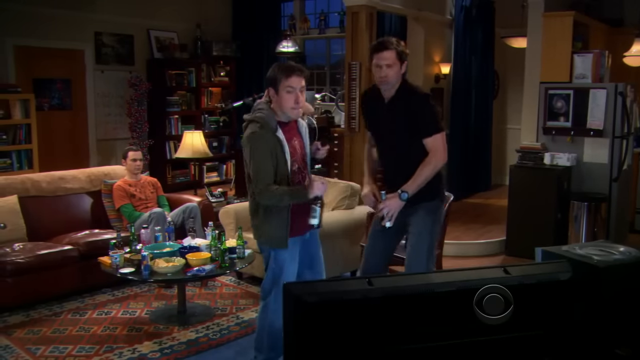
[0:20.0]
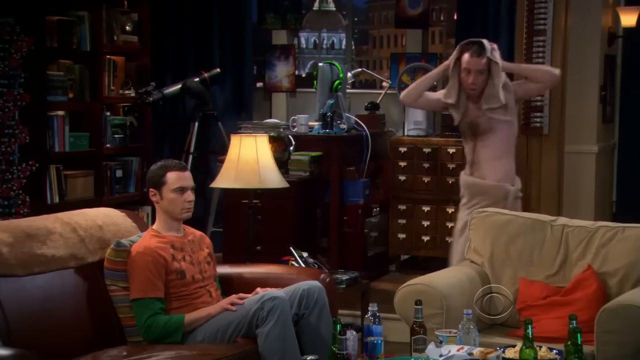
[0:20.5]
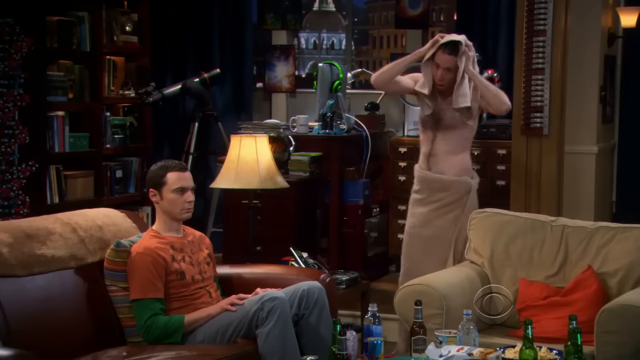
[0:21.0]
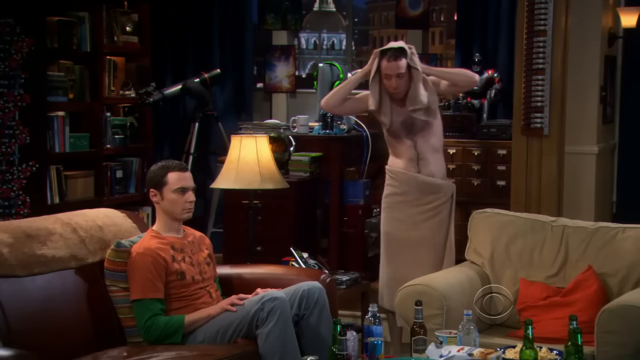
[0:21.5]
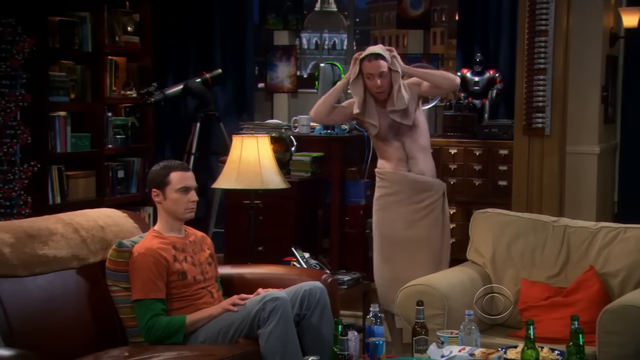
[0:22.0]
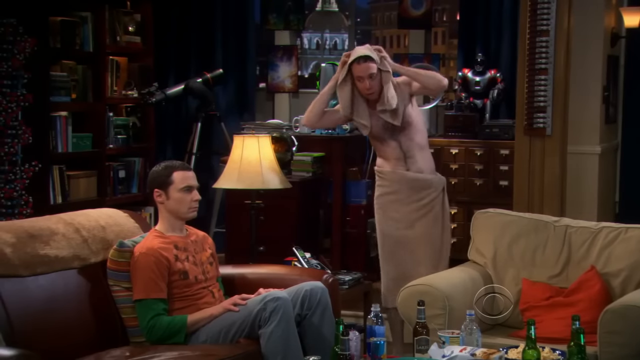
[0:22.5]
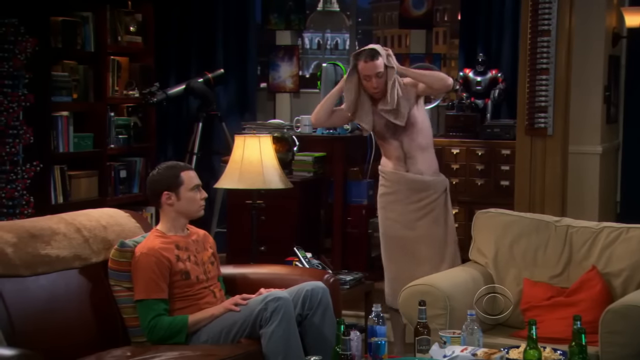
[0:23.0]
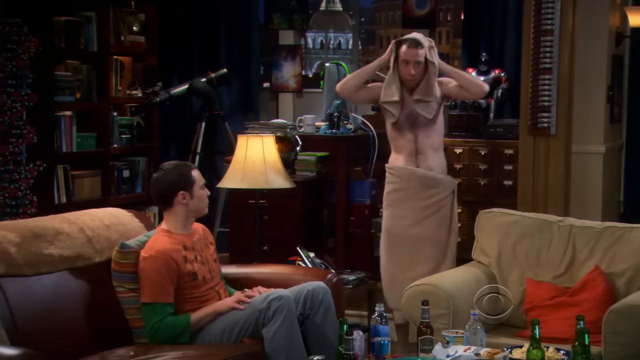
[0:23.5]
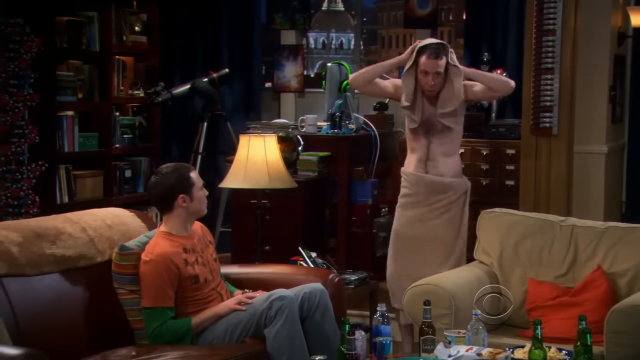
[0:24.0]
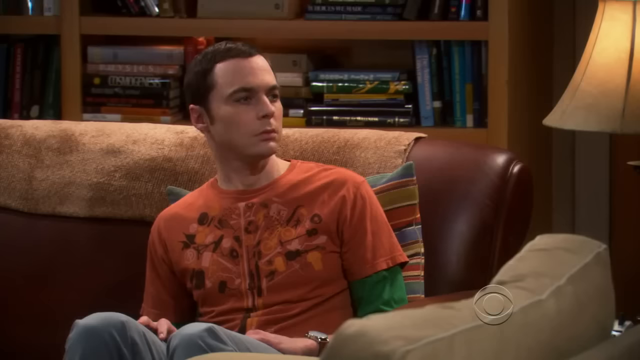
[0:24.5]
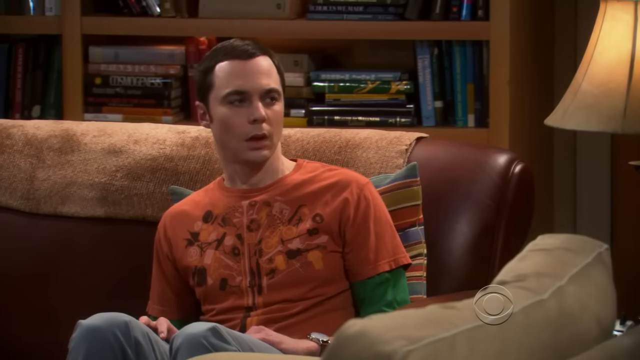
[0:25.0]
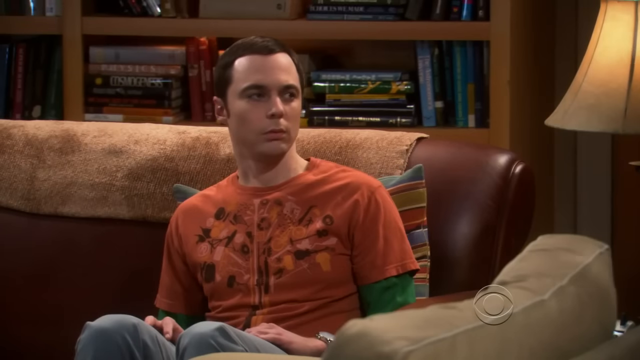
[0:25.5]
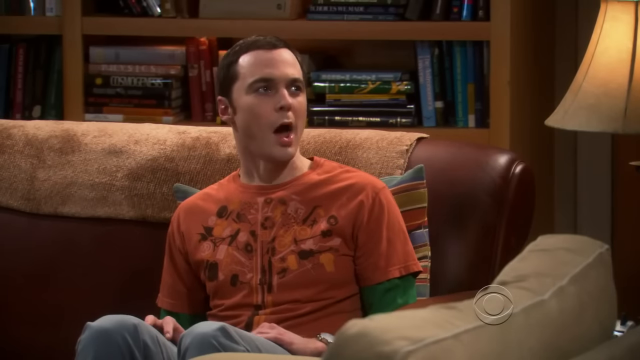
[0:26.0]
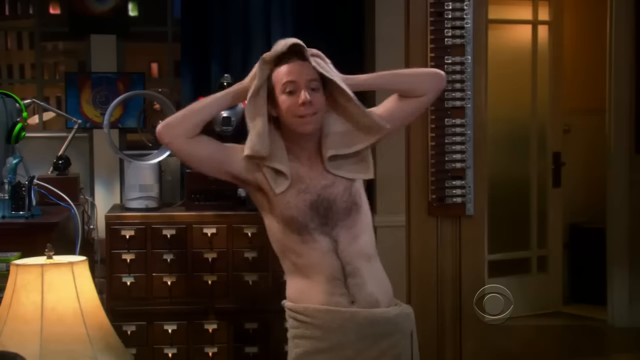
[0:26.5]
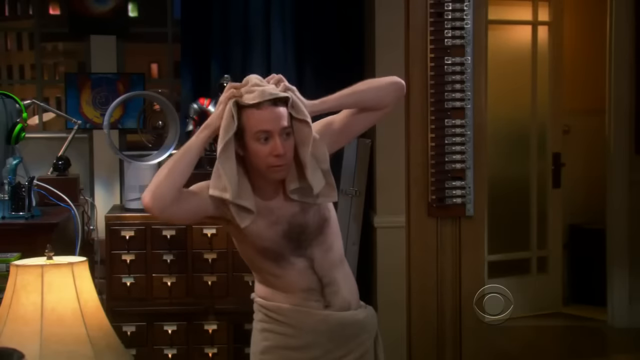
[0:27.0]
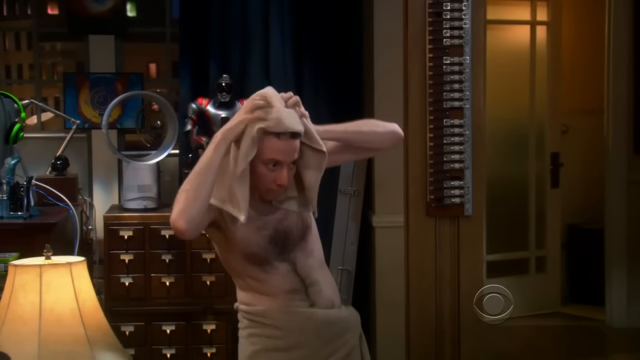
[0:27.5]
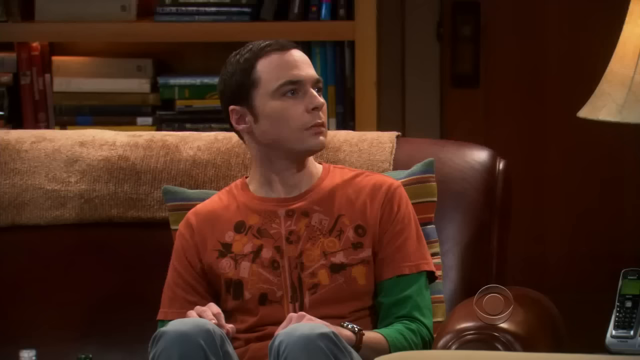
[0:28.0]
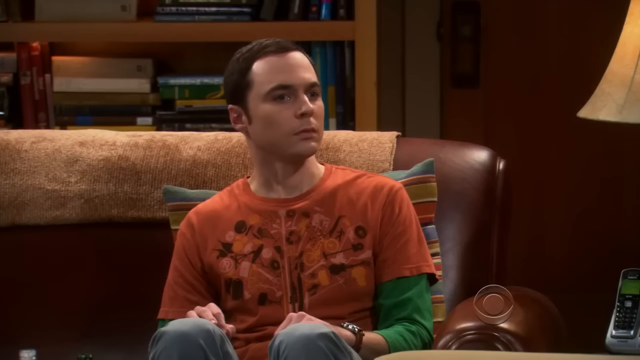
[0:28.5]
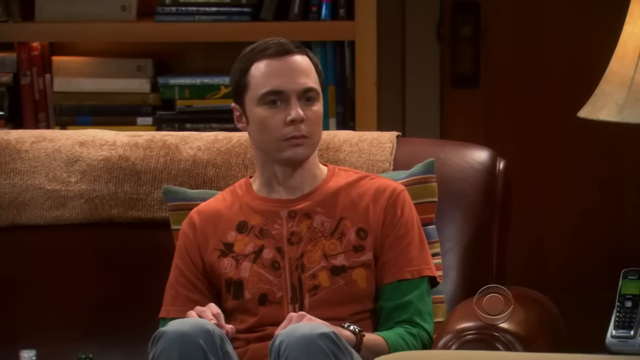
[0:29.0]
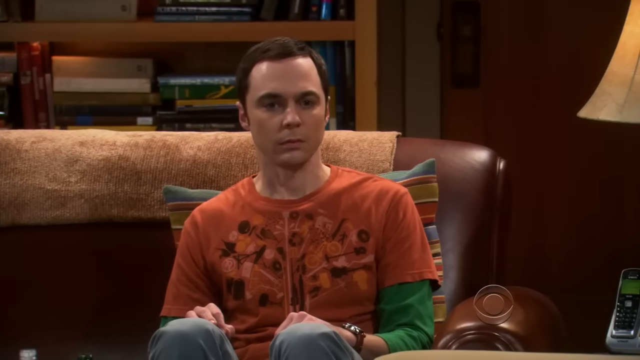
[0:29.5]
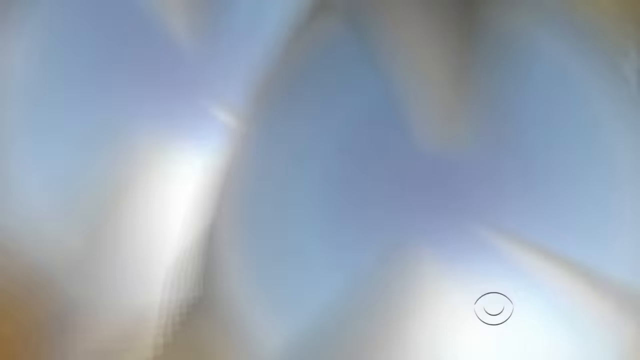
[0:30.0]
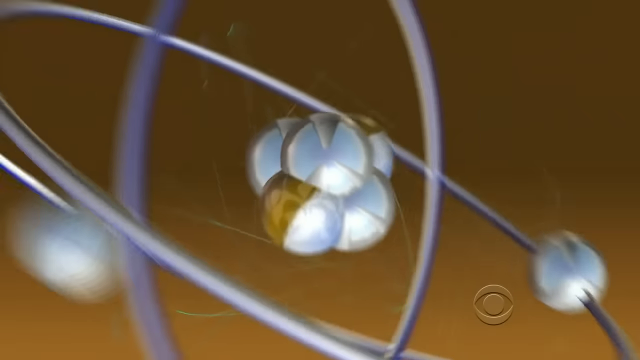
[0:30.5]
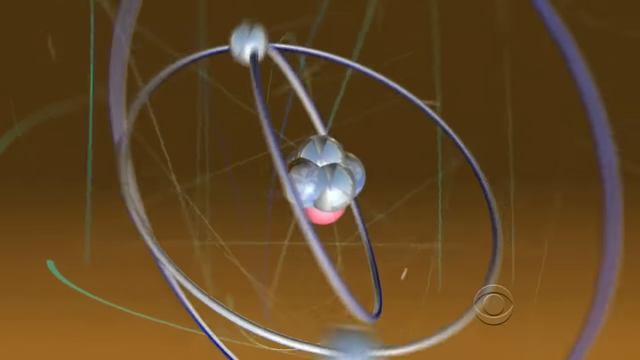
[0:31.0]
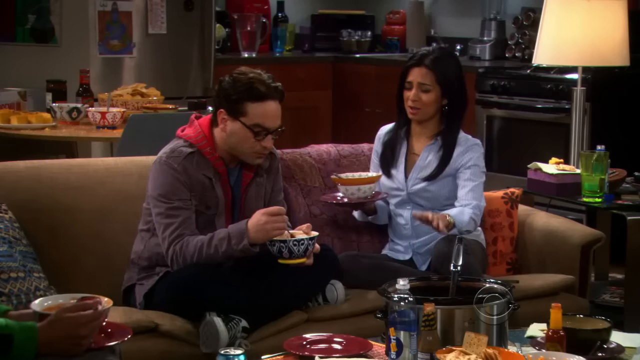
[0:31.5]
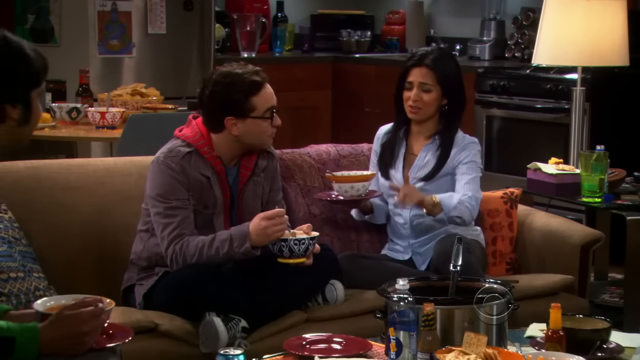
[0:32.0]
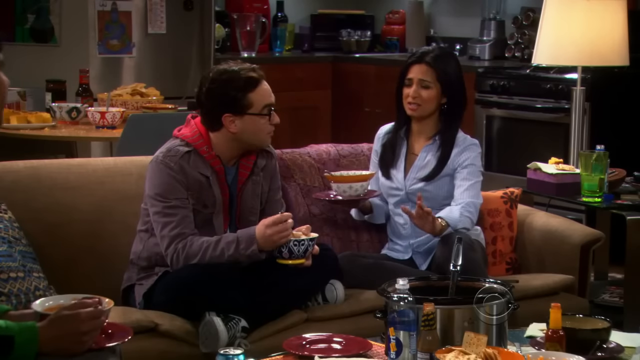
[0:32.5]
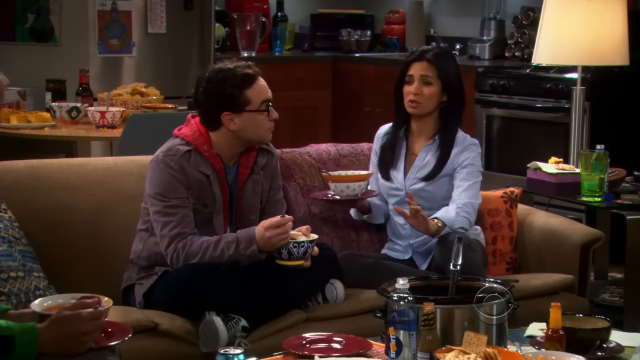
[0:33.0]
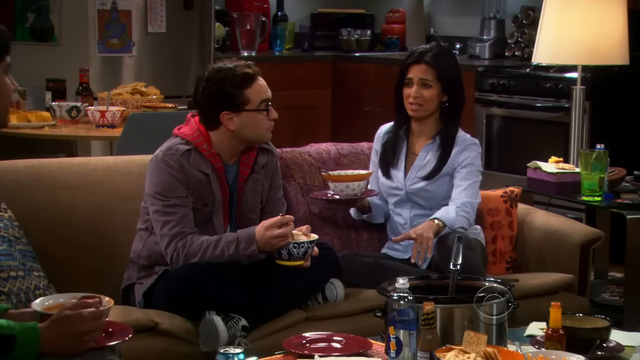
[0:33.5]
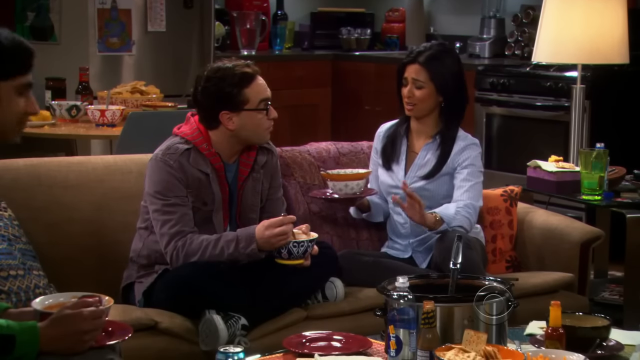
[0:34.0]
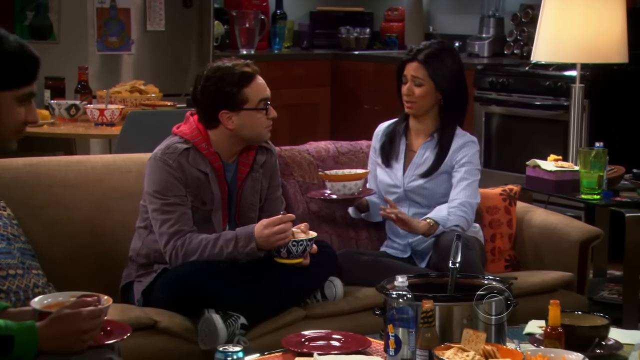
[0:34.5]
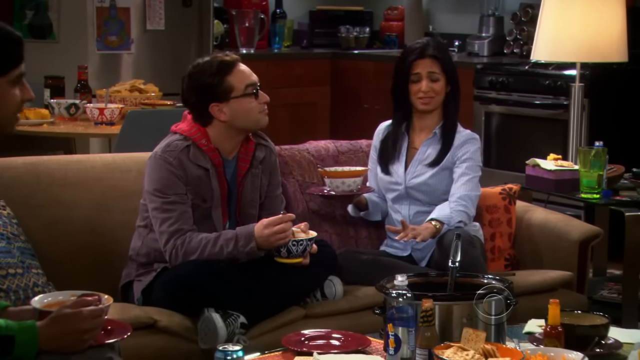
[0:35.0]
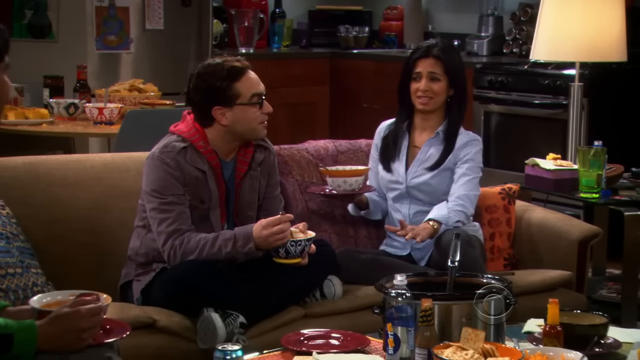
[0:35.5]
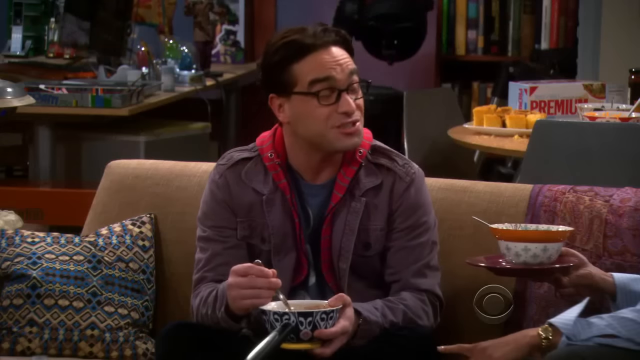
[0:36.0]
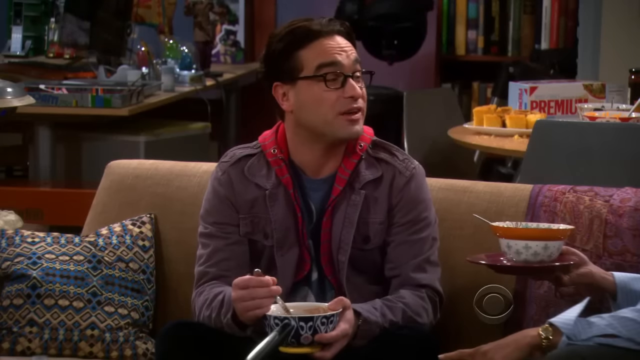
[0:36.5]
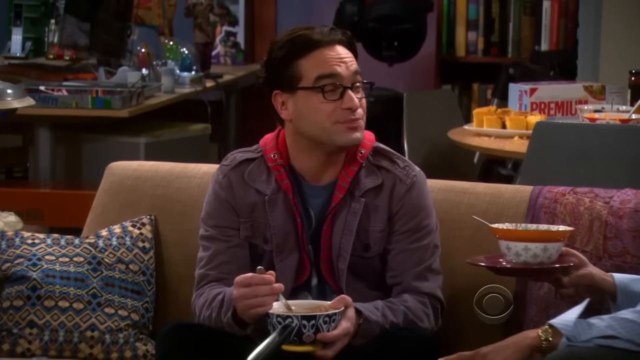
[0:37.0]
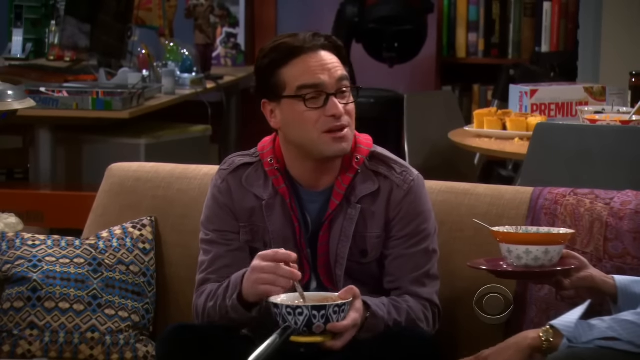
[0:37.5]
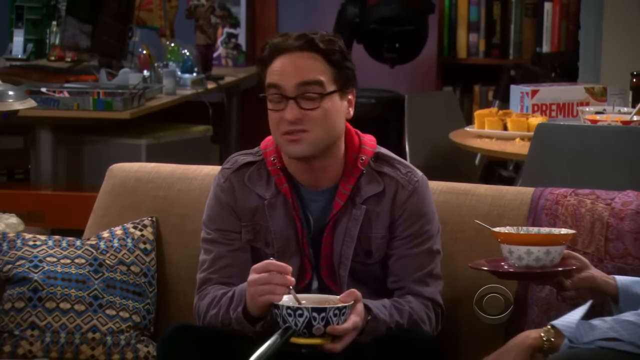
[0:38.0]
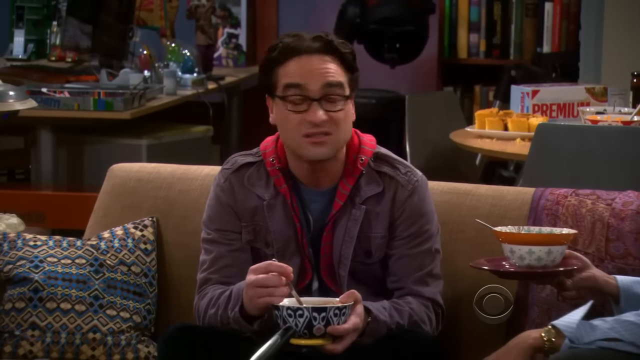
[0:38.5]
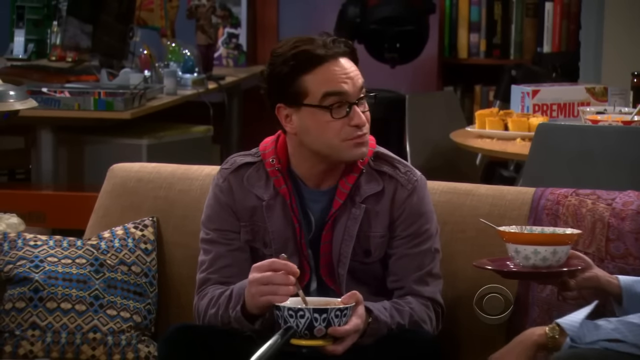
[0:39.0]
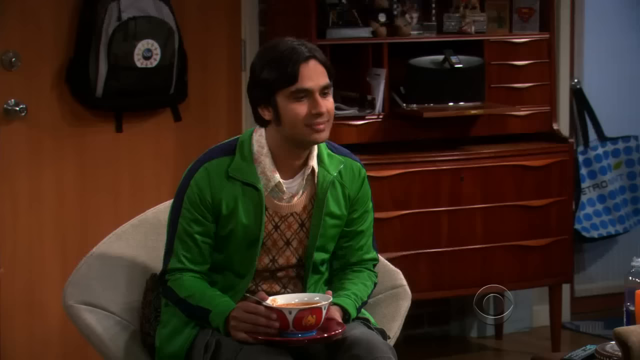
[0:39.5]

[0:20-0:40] A guy comes out of the shower, sort of drying his hair with a towel, and comes up to Sheldon, who looks at him as the guy talks to him. Sheldon keeps a straight, narrow face and seems appalled that the guy has only a towel wrapped around him and no clothes. Sheldon's roommate is in the Indian guy's apartment, sitting on the couch talking to the Indian guy and his girlfriend; they sit on the couch with crackers behind them. The scene goes back to Sheldon in his own apartment with the three people, one of whom is apparently the guy from the bookstore. In the other apartment, they are eating something from a bowl, possibly soup, and the roommate holds a spoon in his right hand.